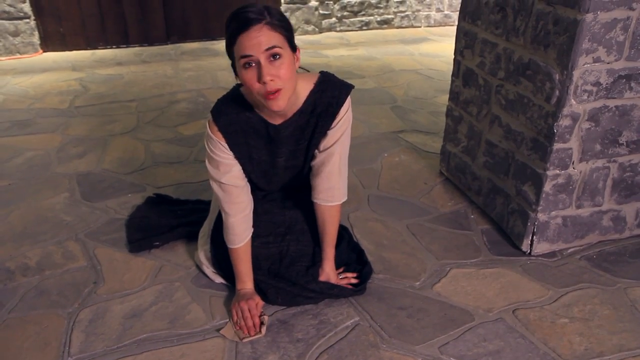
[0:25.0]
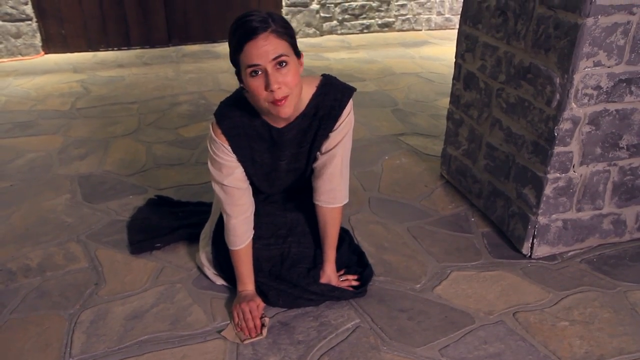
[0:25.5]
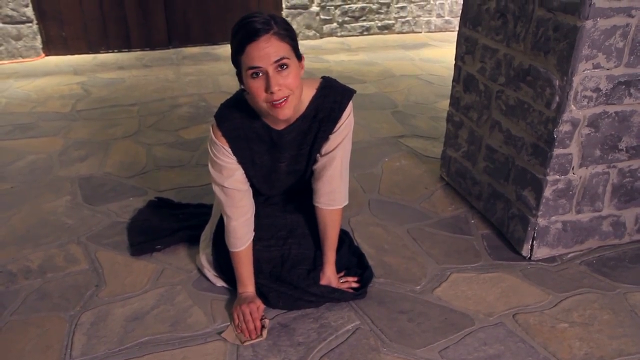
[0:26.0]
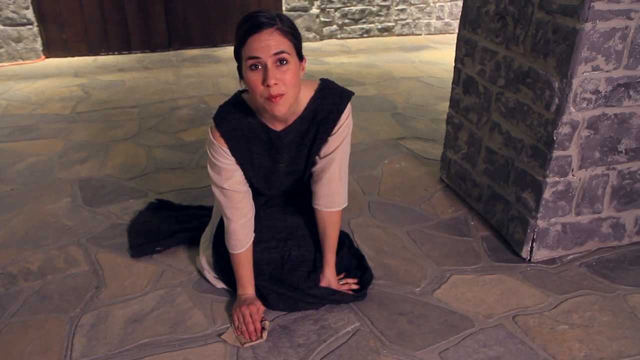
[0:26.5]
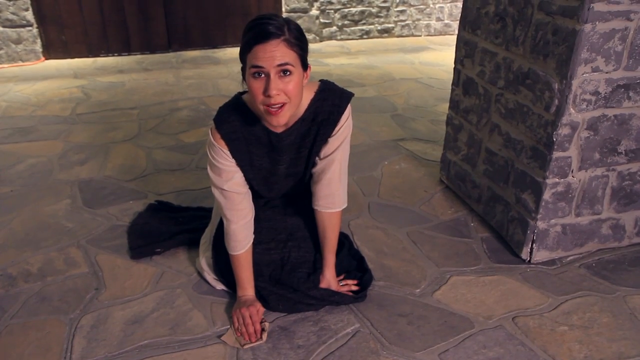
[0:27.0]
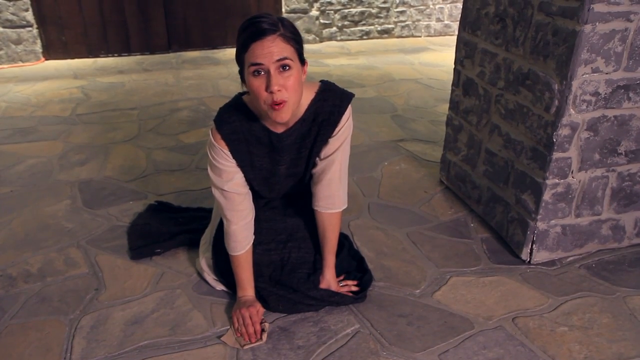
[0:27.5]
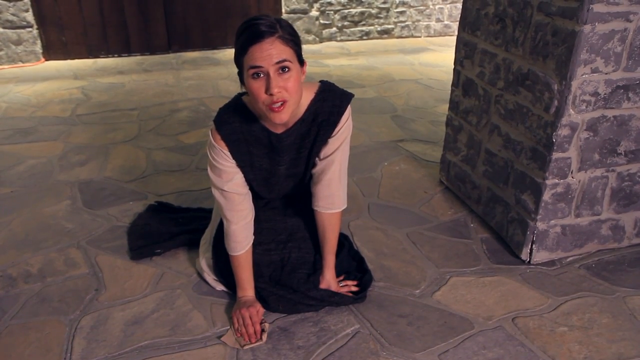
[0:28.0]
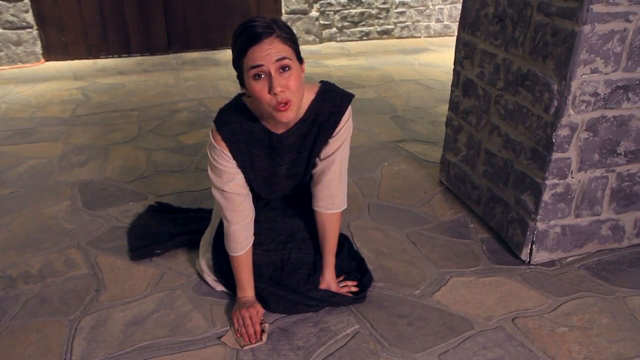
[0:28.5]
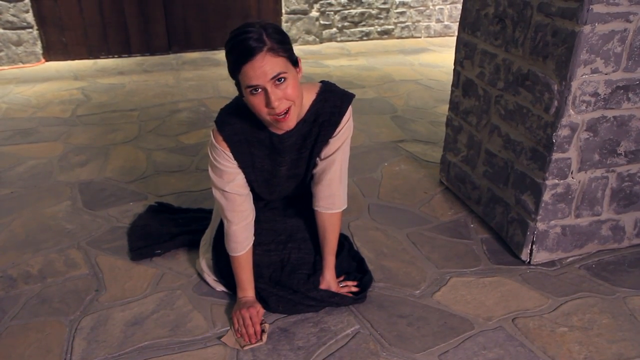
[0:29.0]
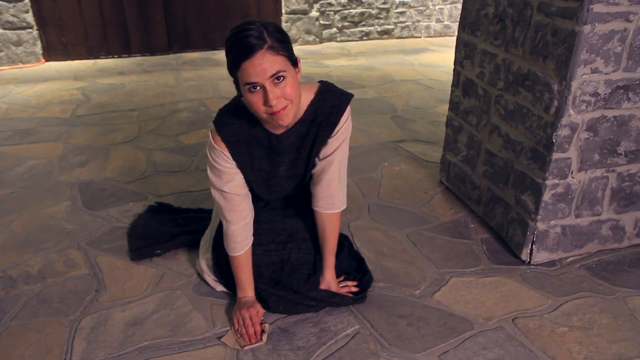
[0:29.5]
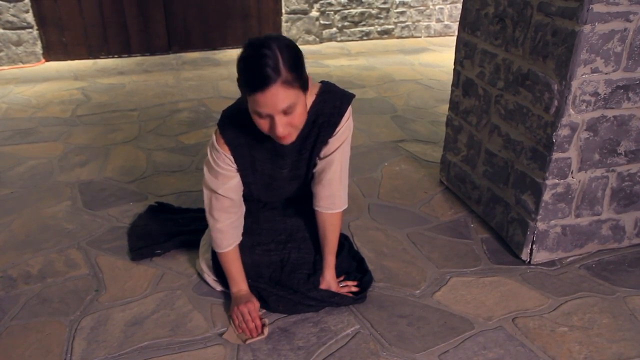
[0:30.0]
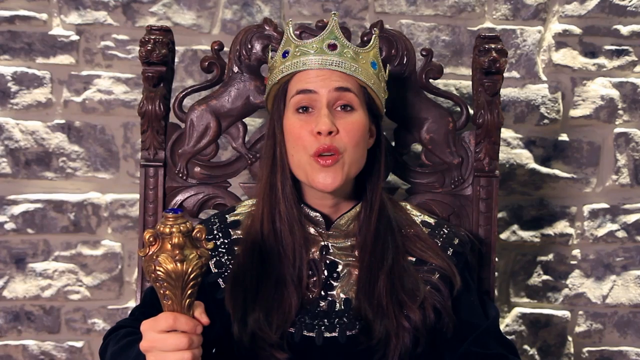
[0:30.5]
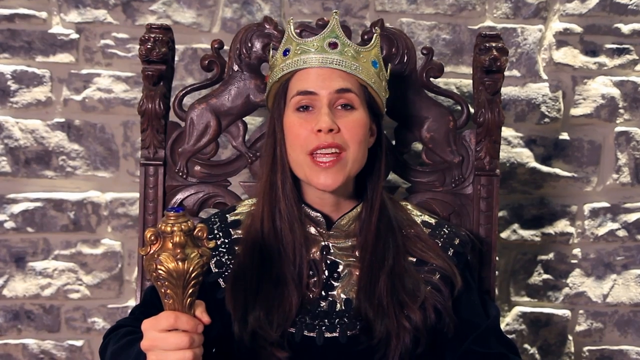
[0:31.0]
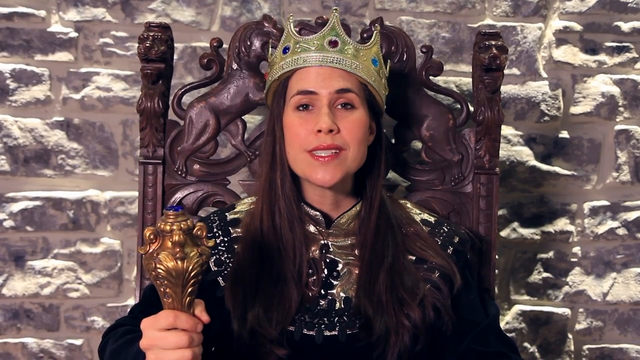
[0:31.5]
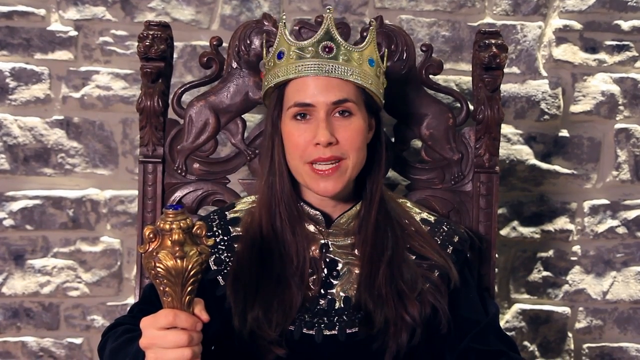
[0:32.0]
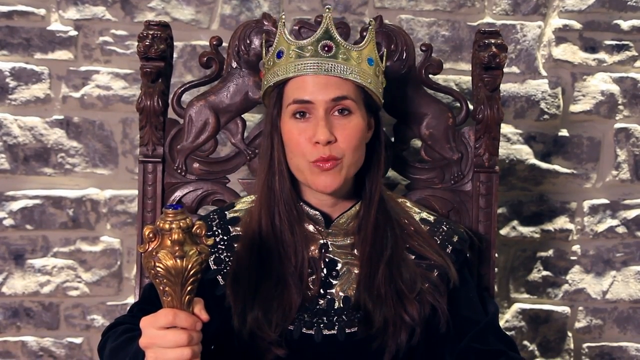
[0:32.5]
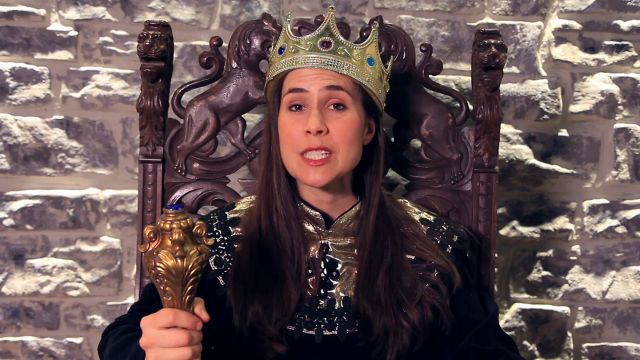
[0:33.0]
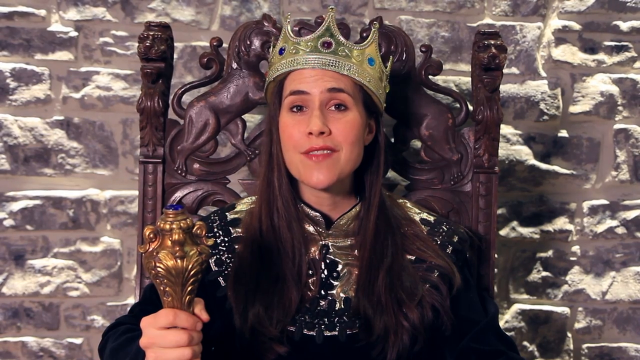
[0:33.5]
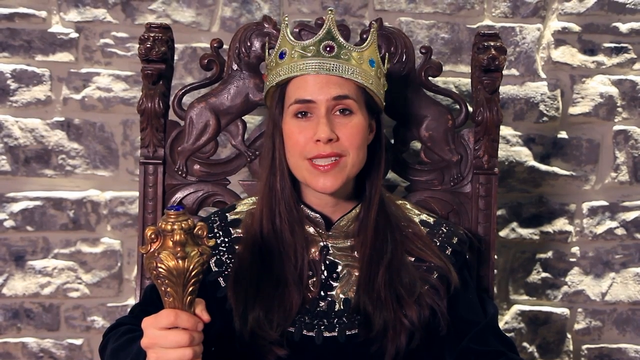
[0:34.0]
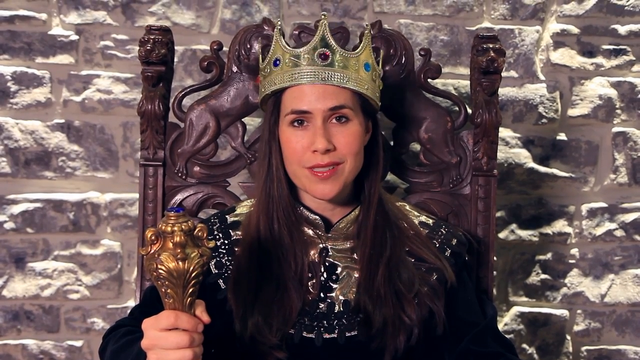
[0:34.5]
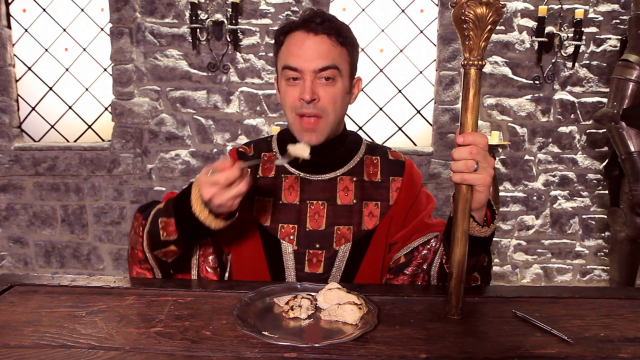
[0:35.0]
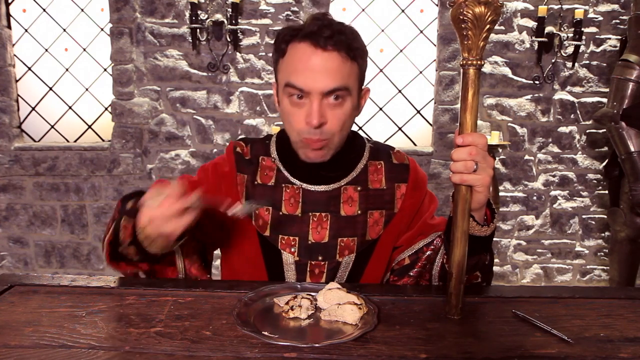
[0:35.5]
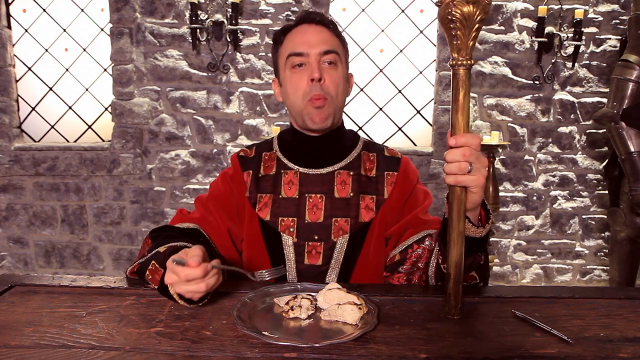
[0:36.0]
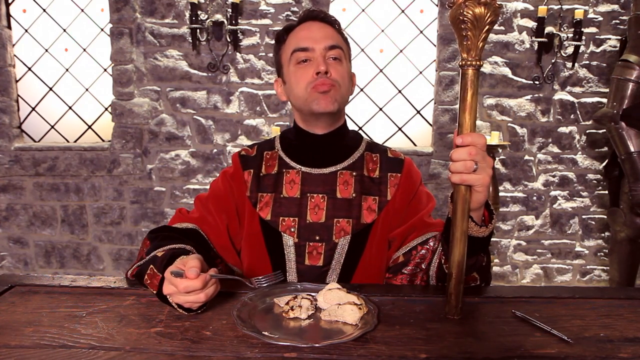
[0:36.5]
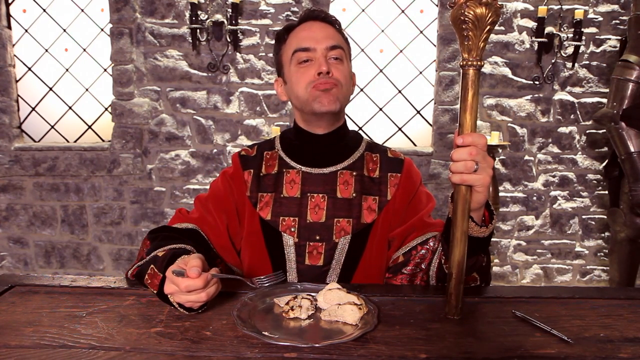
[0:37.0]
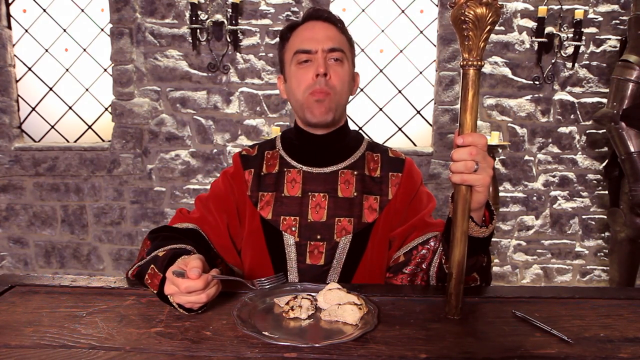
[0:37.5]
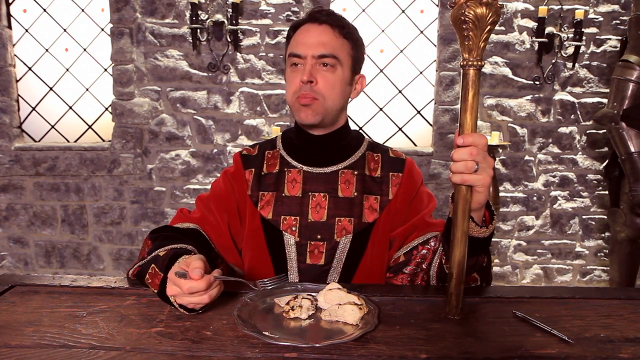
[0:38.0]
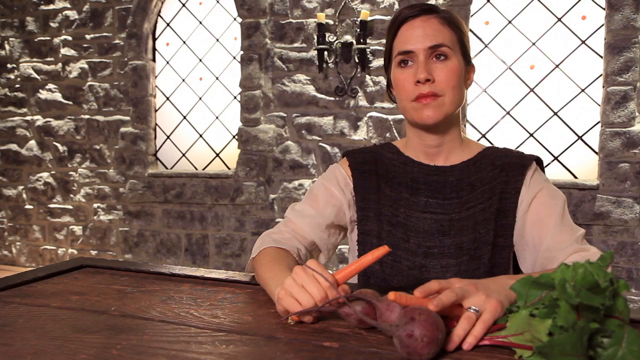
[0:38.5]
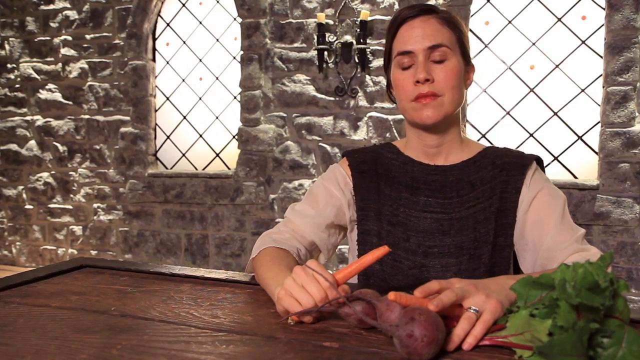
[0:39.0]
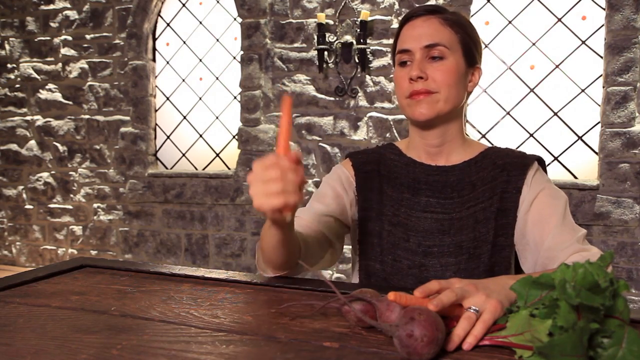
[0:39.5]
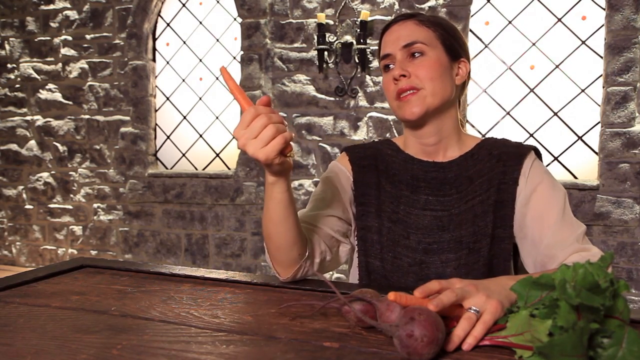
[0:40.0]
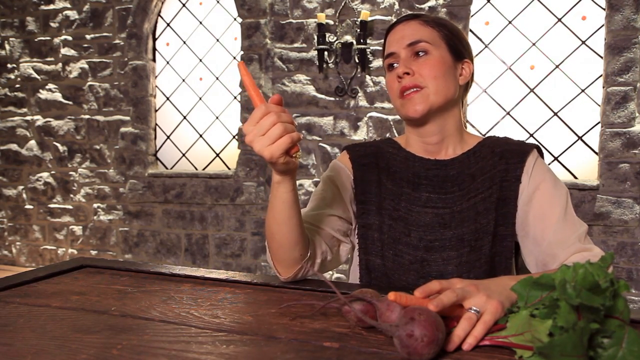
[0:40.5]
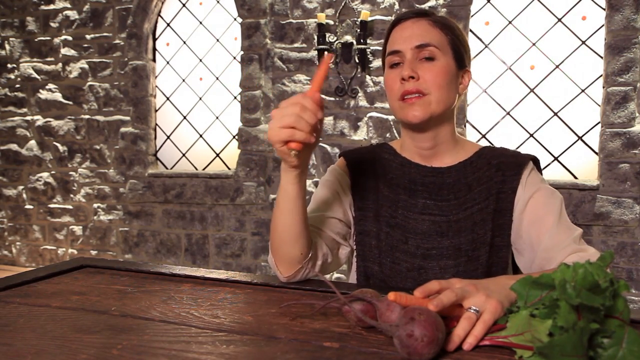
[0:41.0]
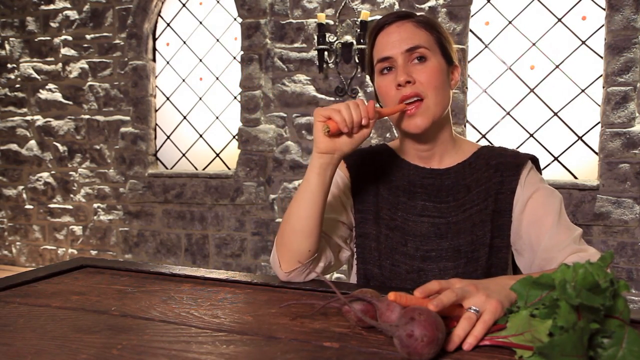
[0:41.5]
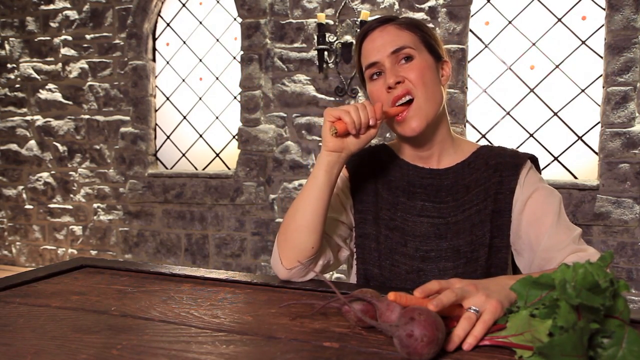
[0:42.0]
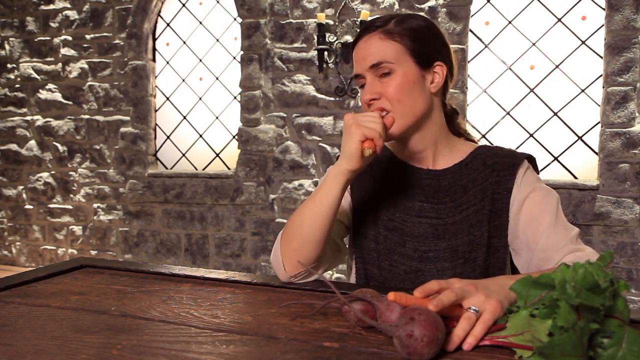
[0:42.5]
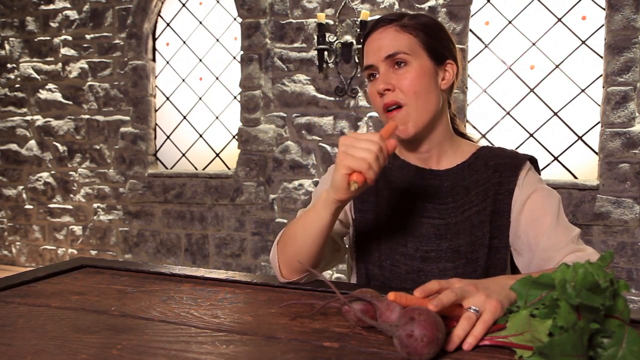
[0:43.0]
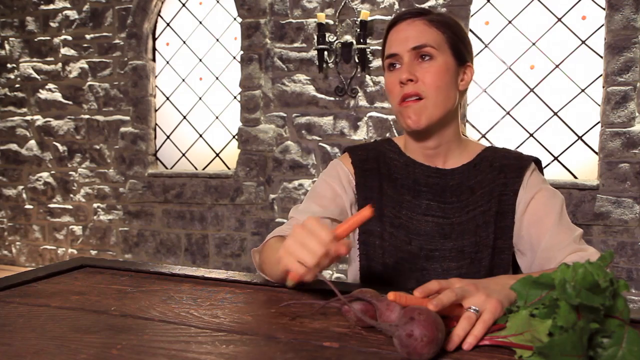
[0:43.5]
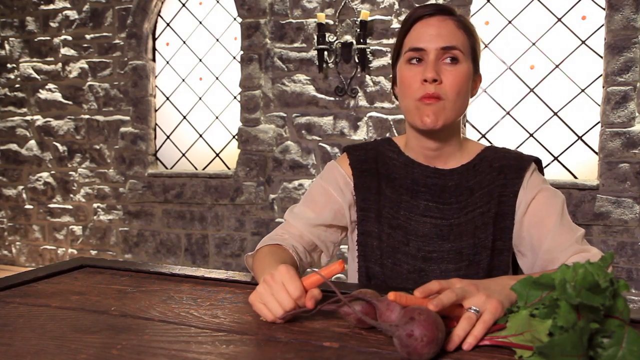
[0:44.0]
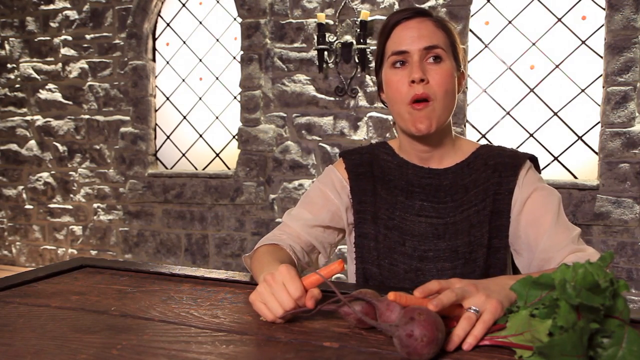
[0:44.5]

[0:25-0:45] The woman kneels, scrubbing the floor while looking up at the camera and talking. The video cuts to a close-up of her dressed as the king, sitting on the throne and talking to the camera. In another room, the man, dressed as before but without the crown, eats food, nods and looks very proud. Then the woman in the dress eats a carrot, looking dissatisfied and unhappy. She does not have a plate, and there are radishes on the table too. She looks to the side, still unhappy.